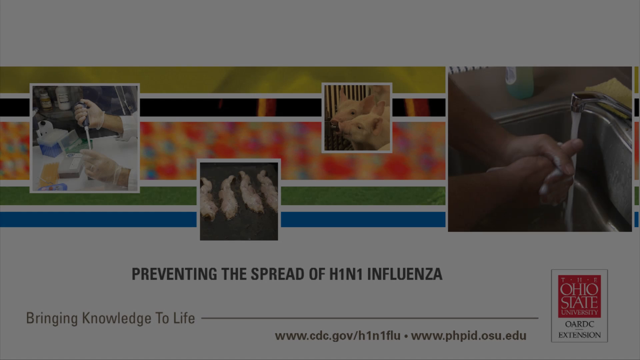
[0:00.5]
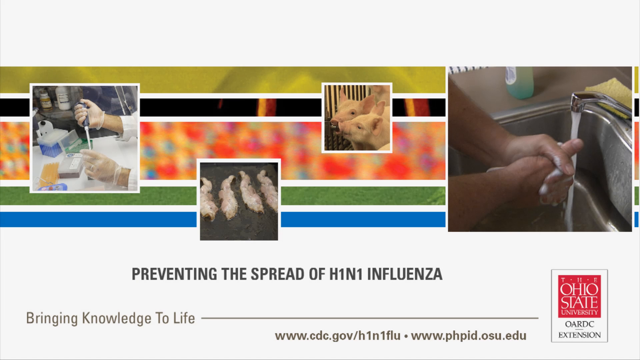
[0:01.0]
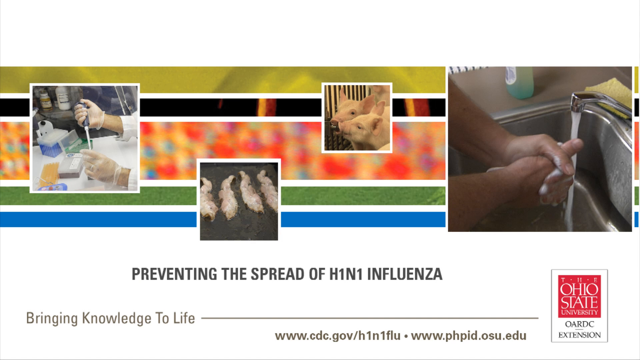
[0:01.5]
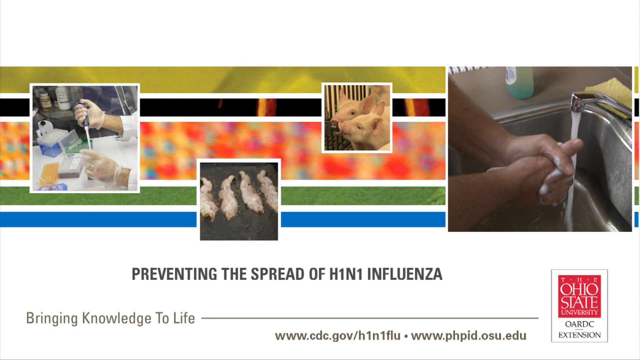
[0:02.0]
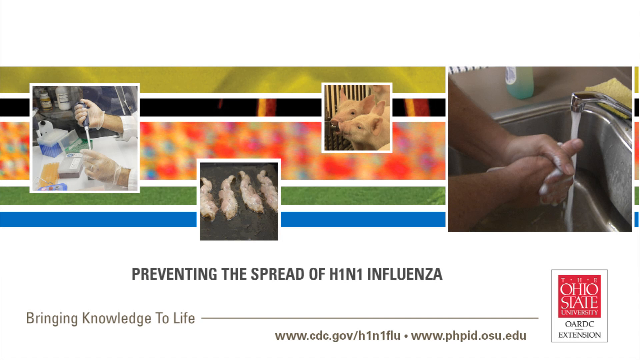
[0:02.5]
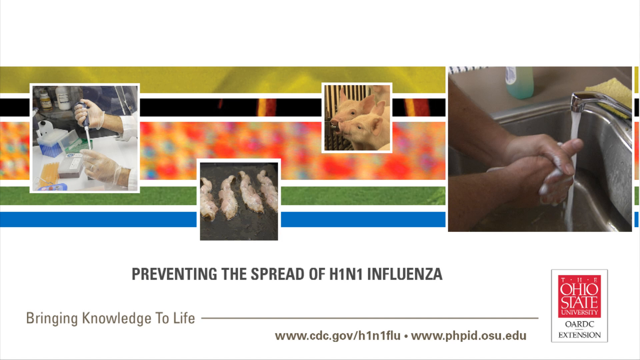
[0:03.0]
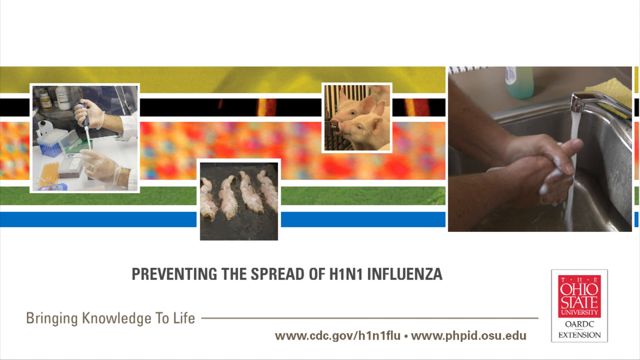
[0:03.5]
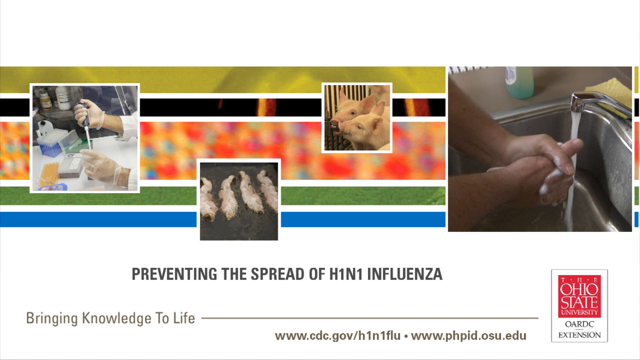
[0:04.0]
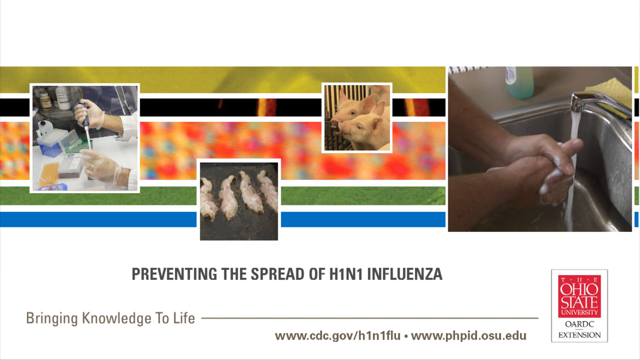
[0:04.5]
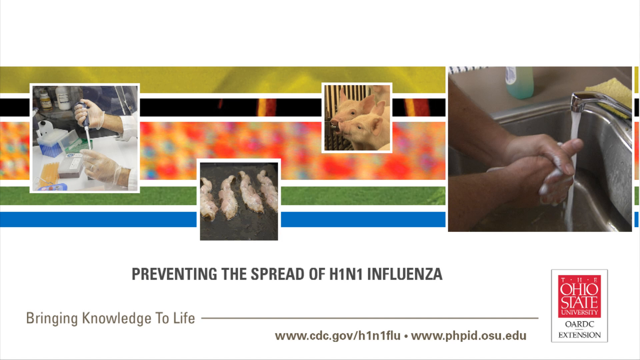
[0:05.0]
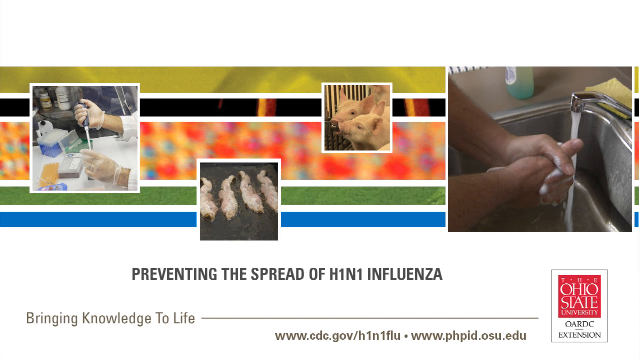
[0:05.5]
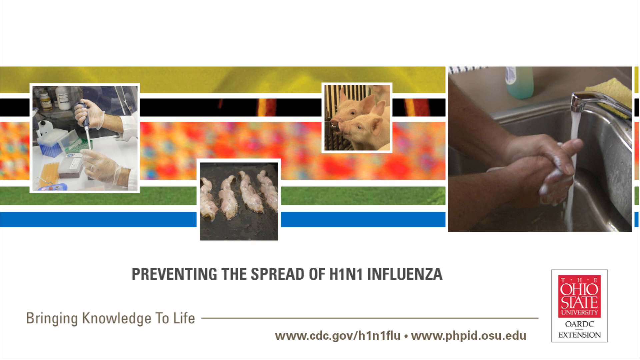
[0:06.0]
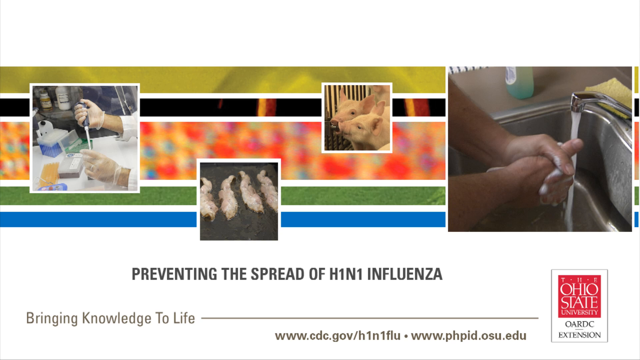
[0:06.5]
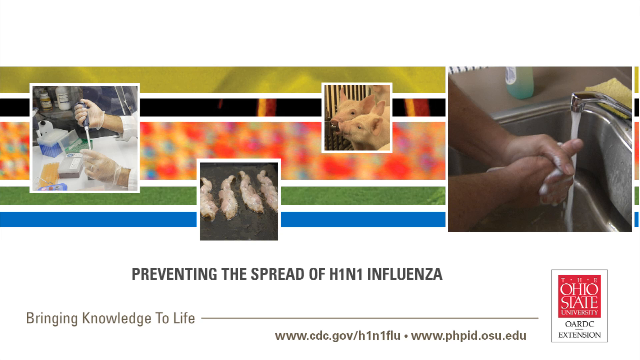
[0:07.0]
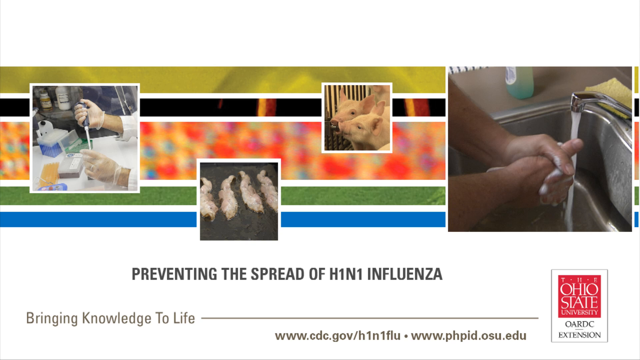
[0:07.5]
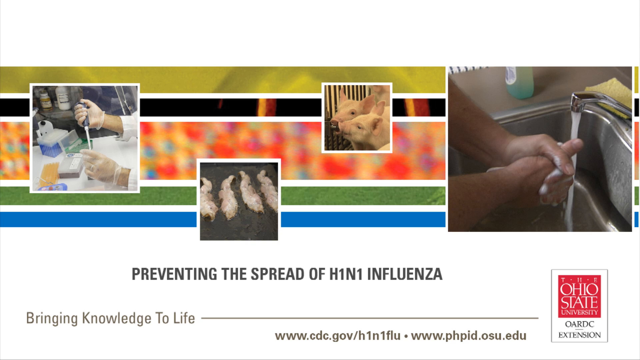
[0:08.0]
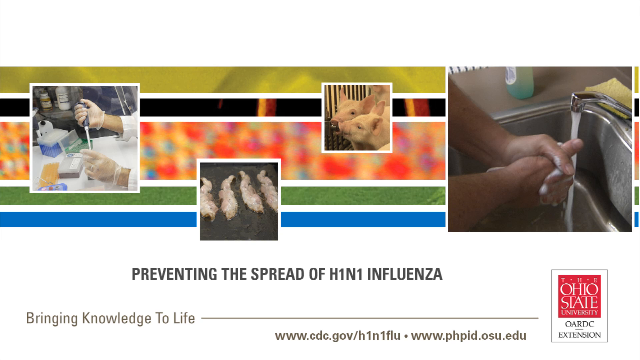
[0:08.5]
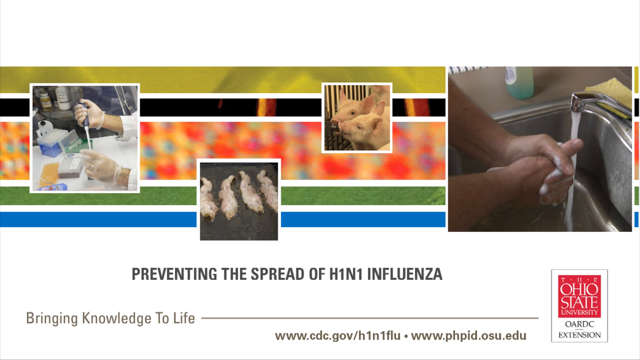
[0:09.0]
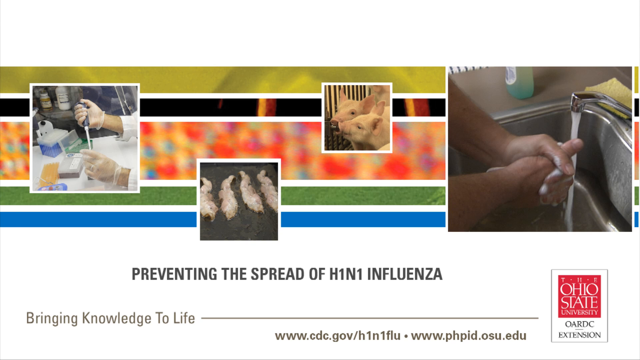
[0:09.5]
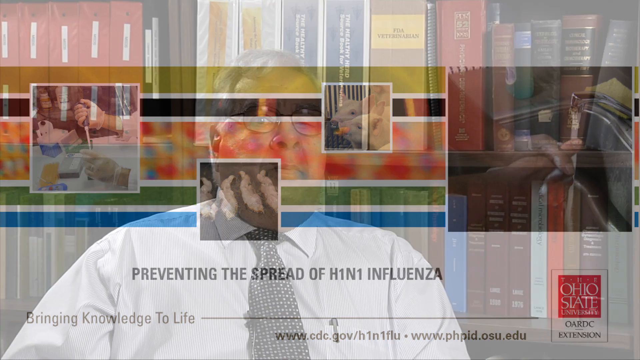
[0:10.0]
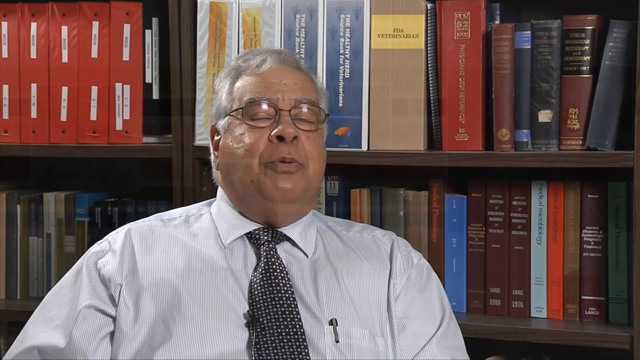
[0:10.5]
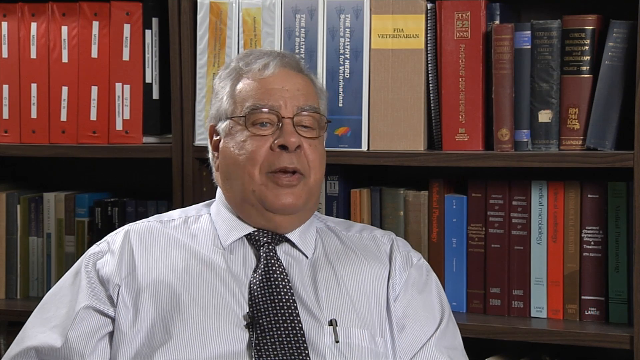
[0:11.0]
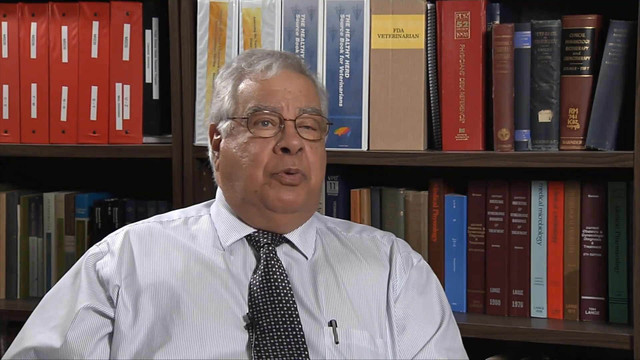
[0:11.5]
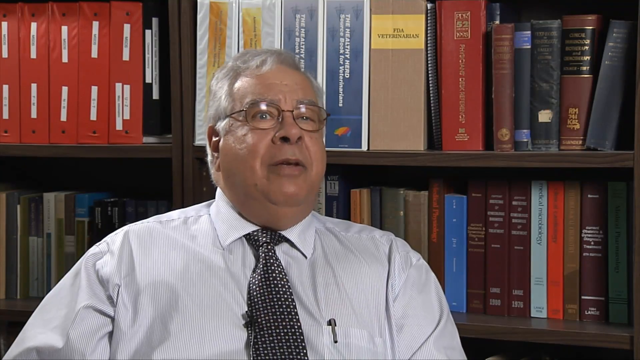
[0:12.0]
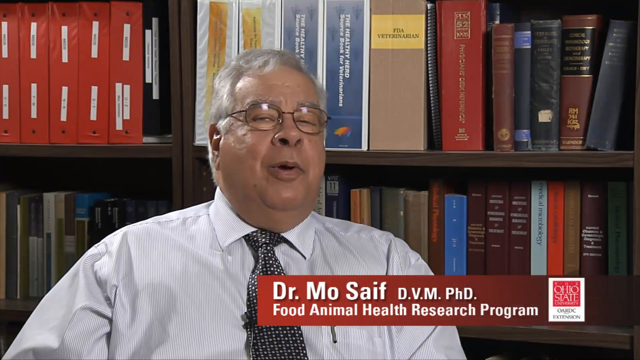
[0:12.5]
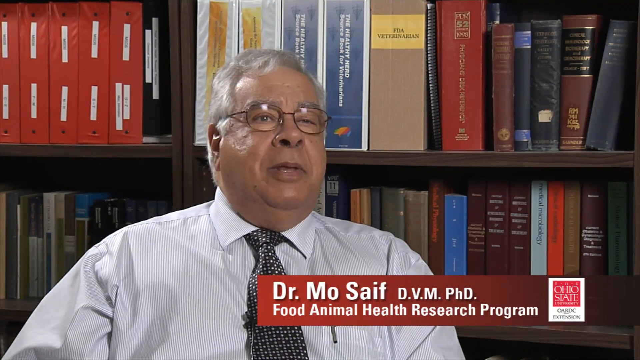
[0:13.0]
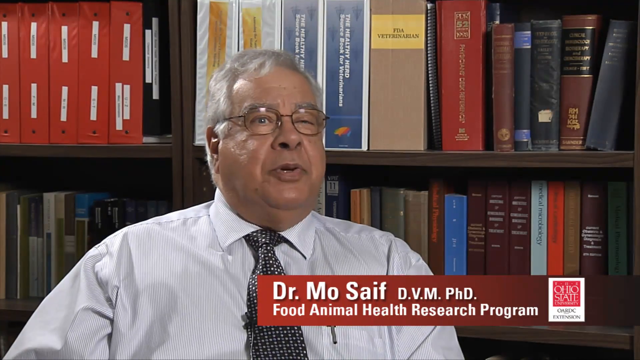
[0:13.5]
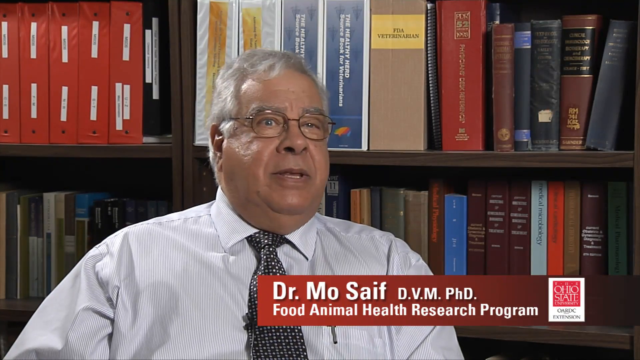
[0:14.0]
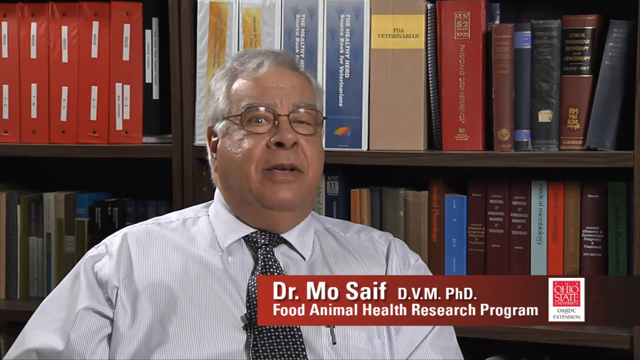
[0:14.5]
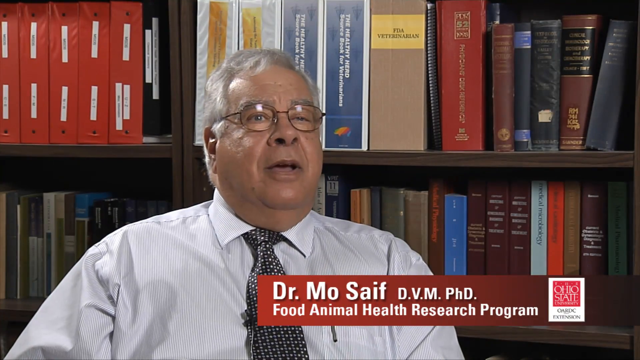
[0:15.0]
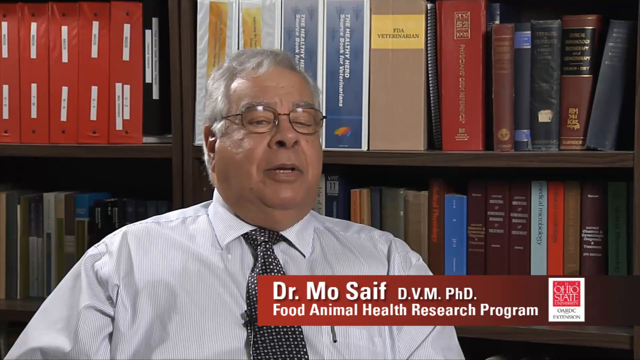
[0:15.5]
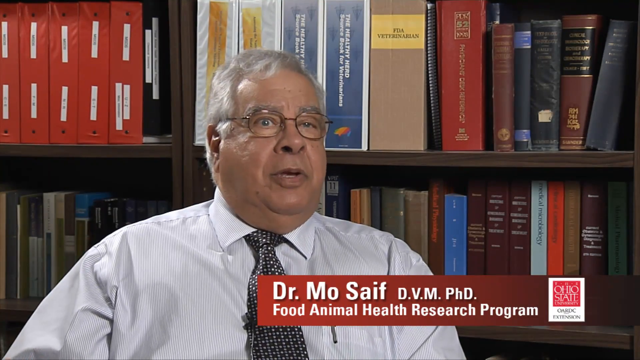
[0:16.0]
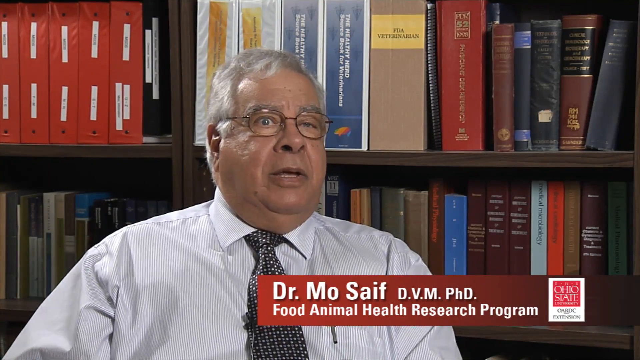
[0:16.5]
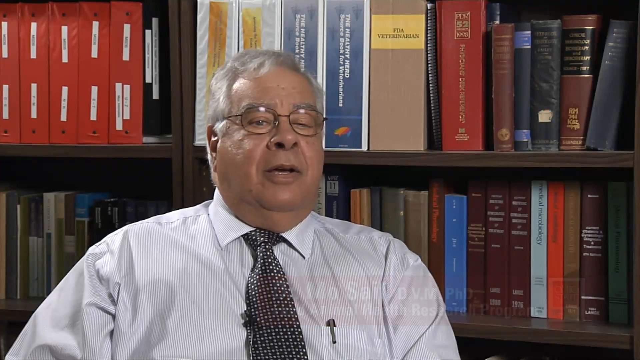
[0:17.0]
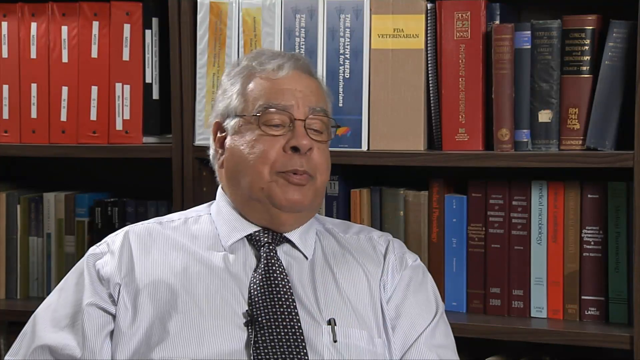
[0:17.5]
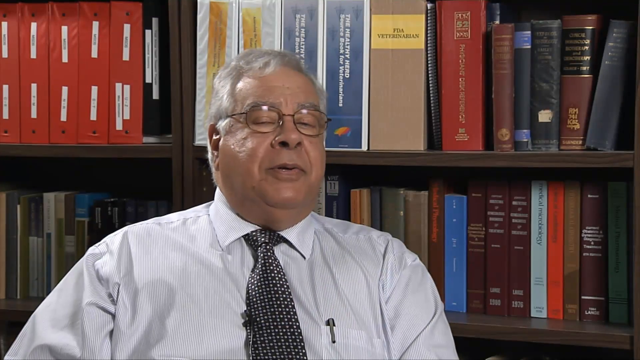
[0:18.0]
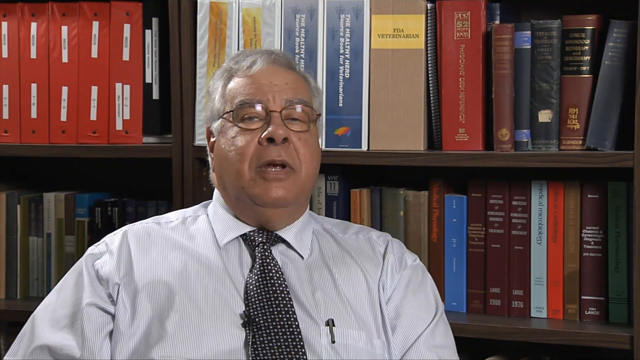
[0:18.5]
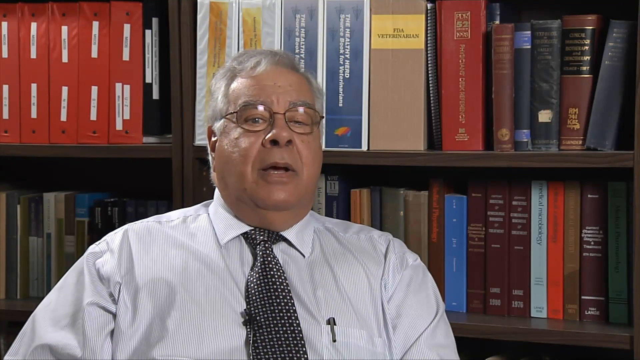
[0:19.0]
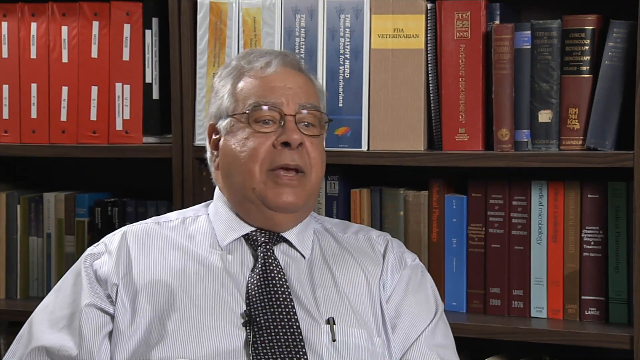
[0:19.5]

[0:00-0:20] A man identified as Dr. Mo Saif, PhD, of a food animal research program, is being interviewed while sitting in a chair. He wears glasses and a purple shirt. The backdrop is a bunch of books; it could be his office or a library. Text reads "preventing the spread of H1N1 influenza" and "bringing knowledge to life."